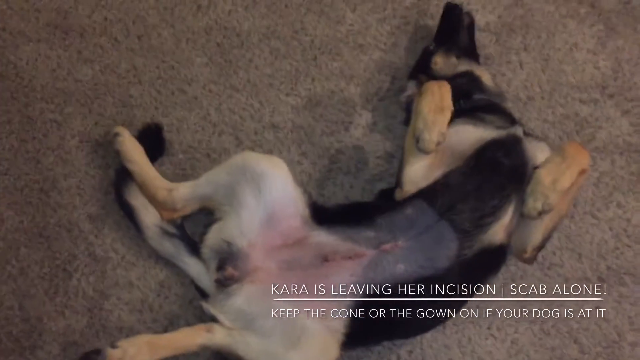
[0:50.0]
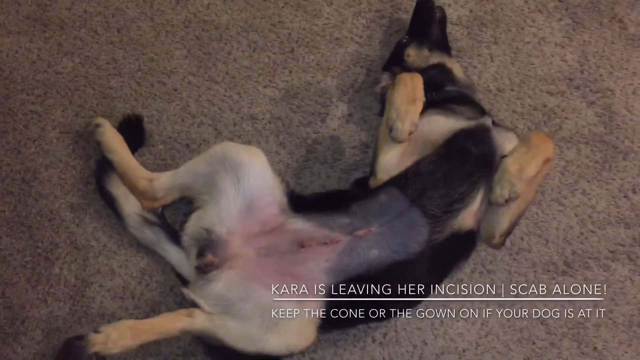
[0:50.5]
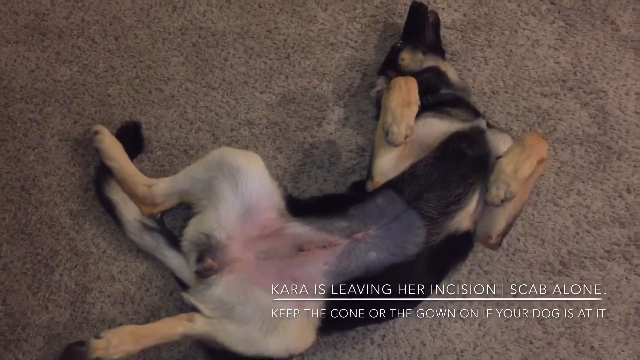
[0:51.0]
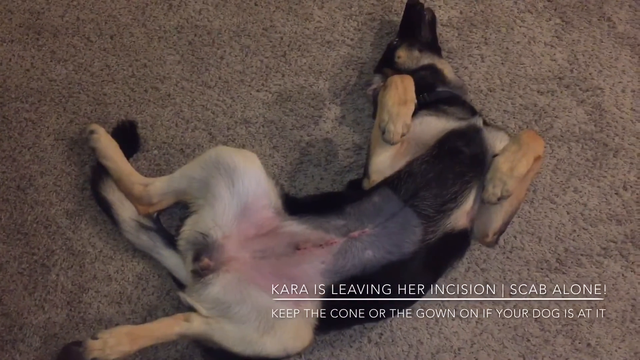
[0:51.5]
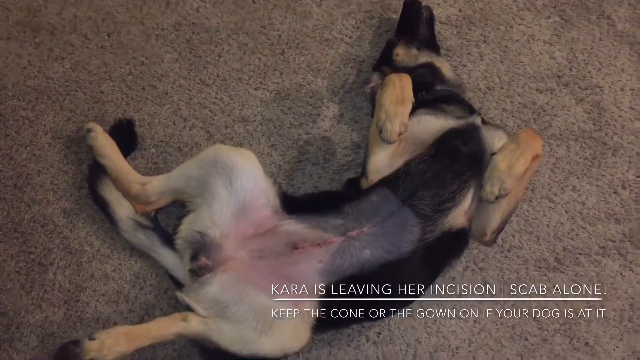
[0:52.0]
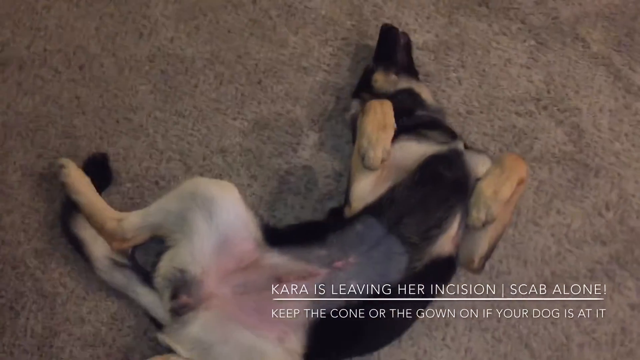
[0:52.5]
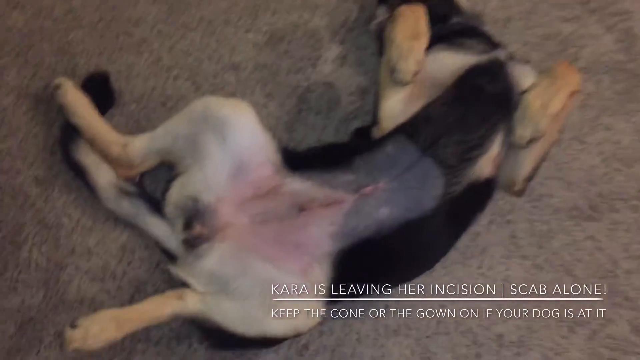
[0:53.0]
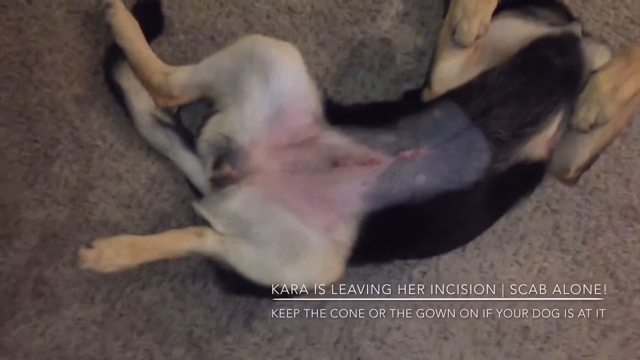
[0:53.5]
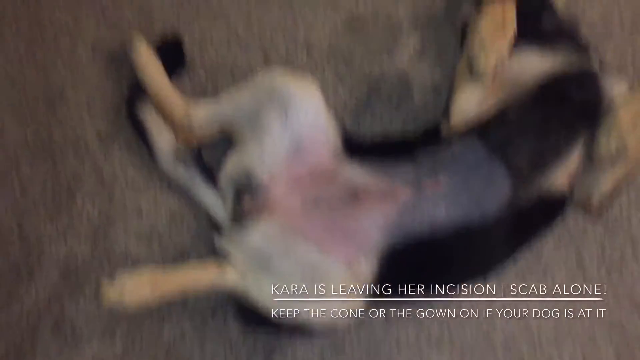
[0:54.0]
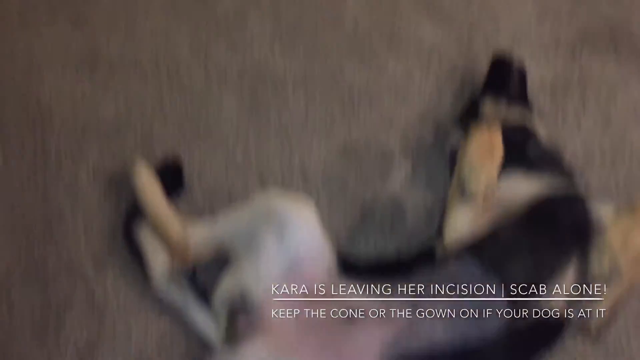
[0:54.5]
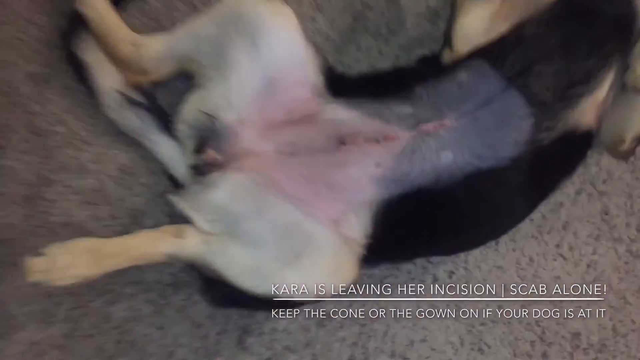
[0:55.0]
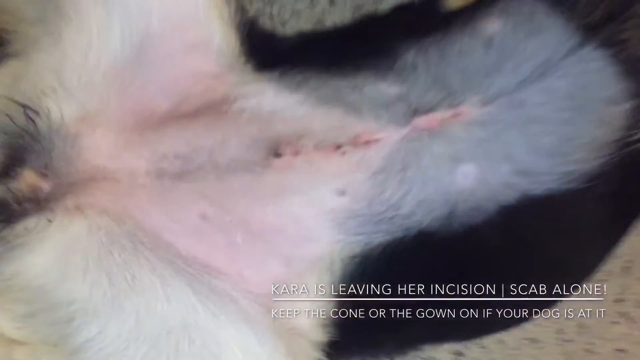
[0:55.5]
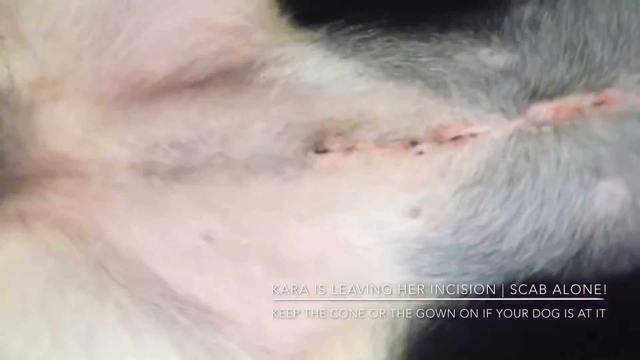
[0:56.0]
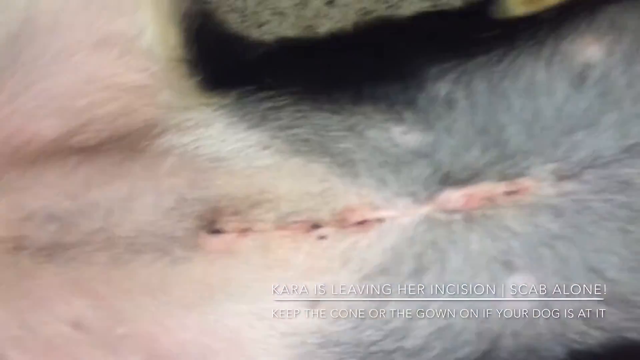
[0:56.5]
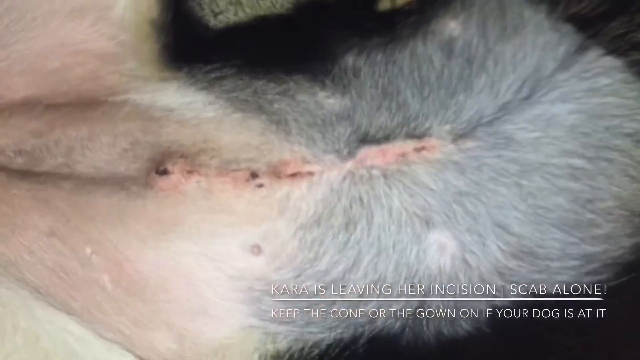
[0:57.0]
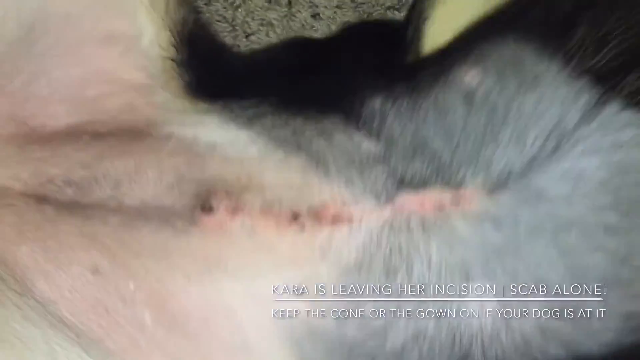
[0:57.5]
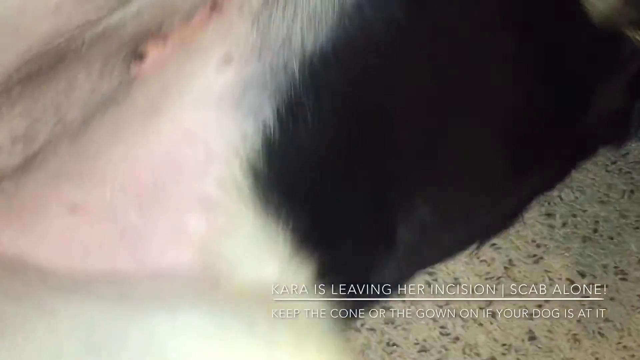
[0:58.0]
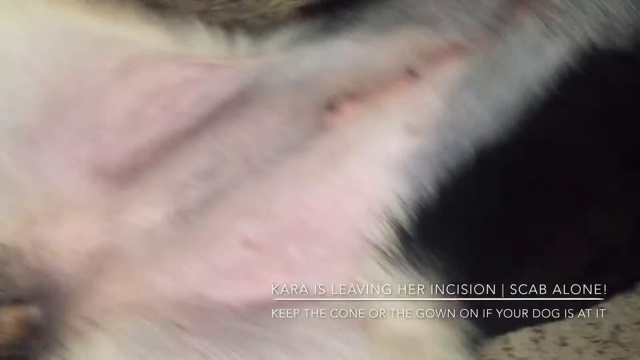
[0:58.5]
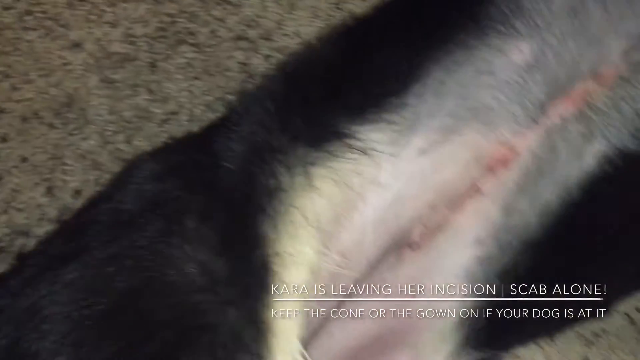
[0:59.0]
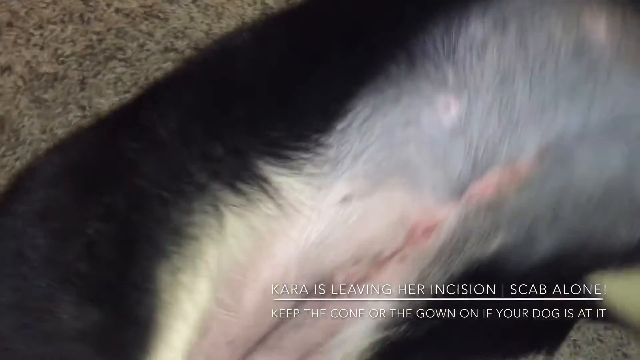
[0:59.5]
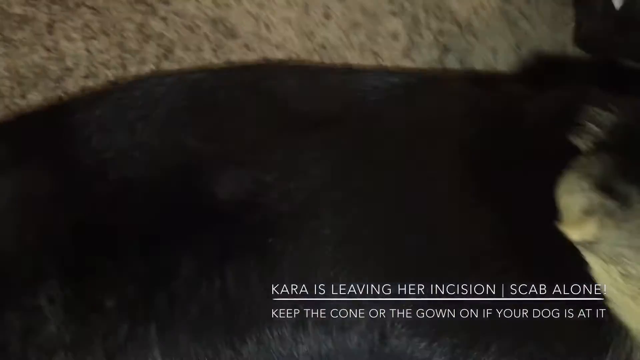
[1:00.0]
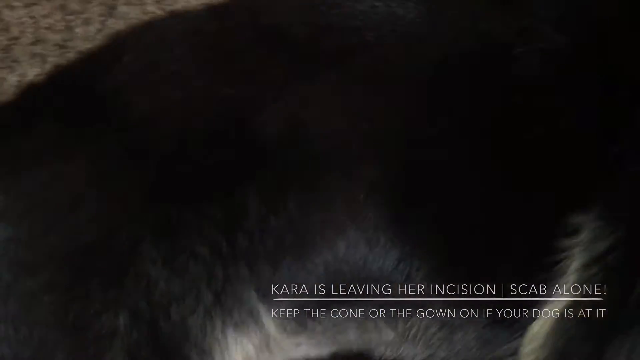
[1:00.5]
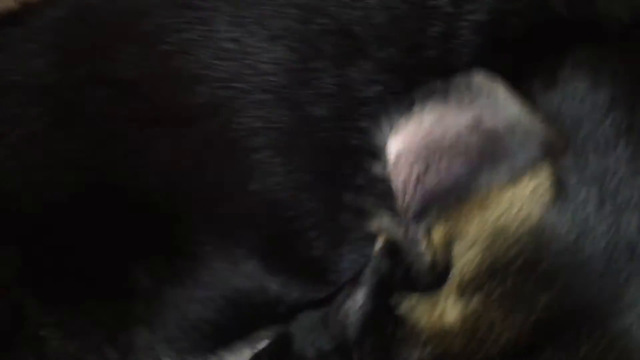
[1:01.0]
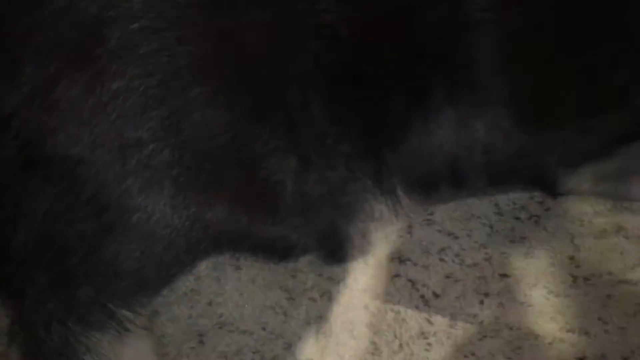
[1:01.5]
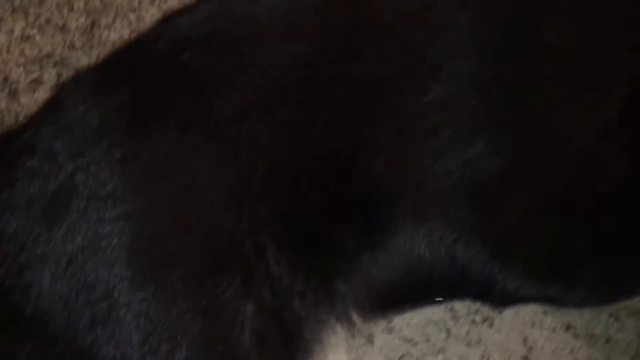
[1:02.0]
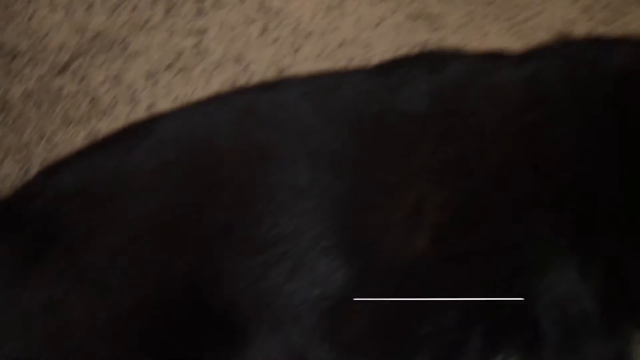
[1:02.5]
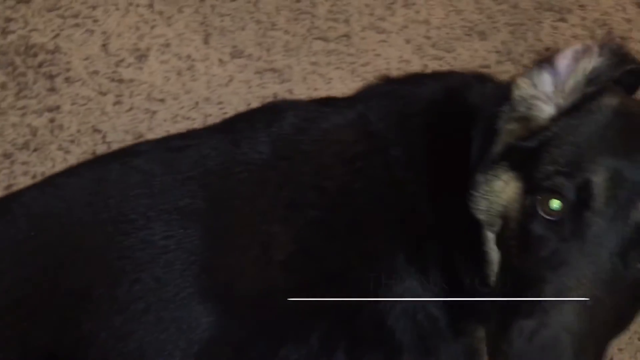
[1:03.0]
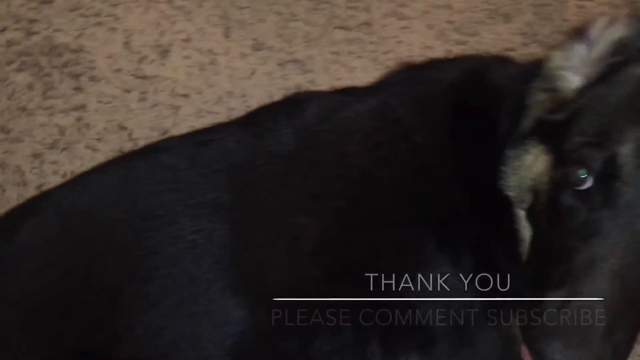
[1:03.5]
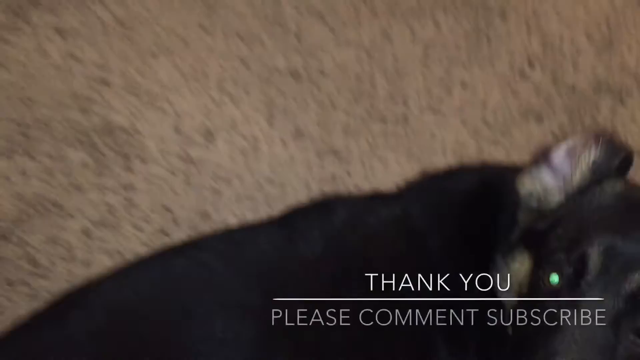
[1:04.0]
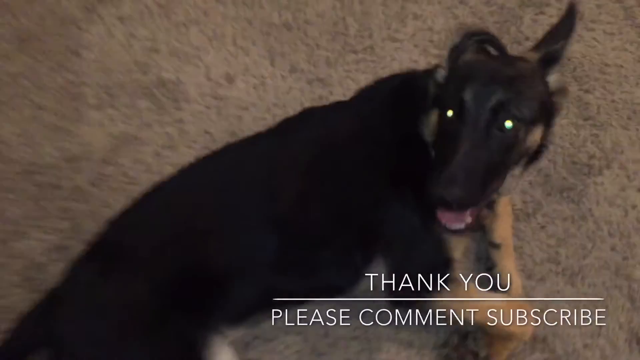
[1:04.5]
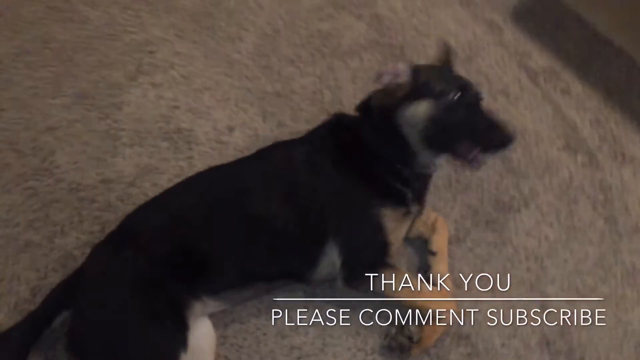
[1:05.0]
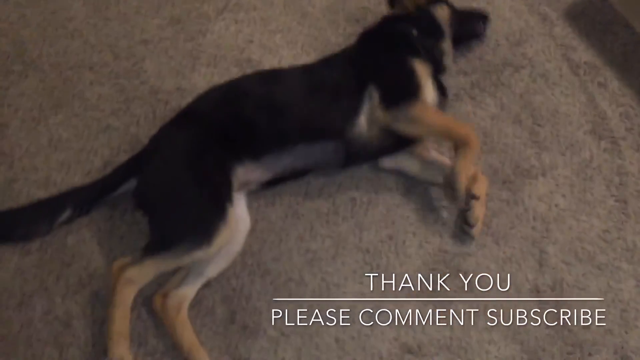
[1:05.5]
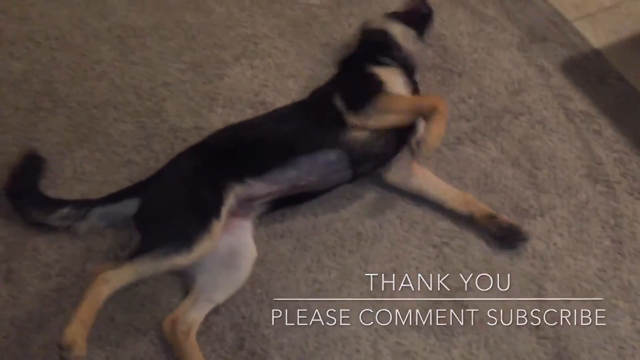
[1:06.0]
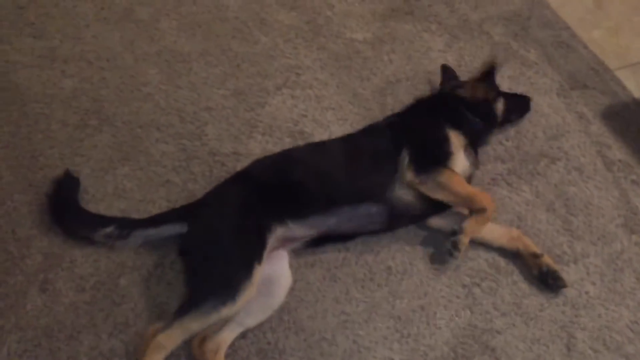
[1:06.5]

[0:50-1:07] The dog continues to play on its back, and a shadow is visible on the carpet as the dog moves and plays around on the floor. A subtitle appears at the bottom right of the shot, and the text continues. The camera zooms out slightly, and the cameraman moves the camera forward and backward, then zooms into the area where the incision was made, which is well. A subtitle reads "thank you please subscribe". The dog stands up and walks away as the video ends, and a reflection of the camera is seen with a gleam of colour.